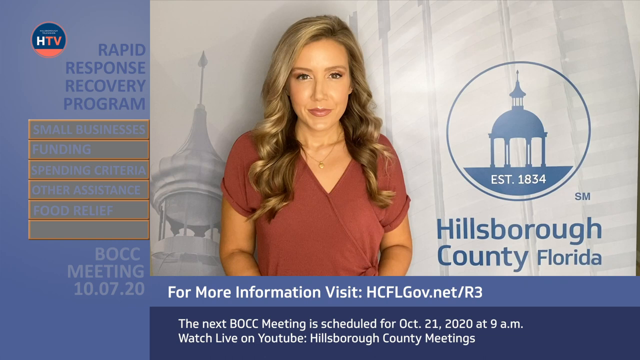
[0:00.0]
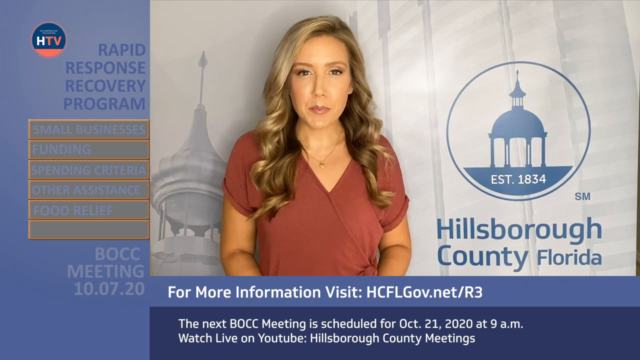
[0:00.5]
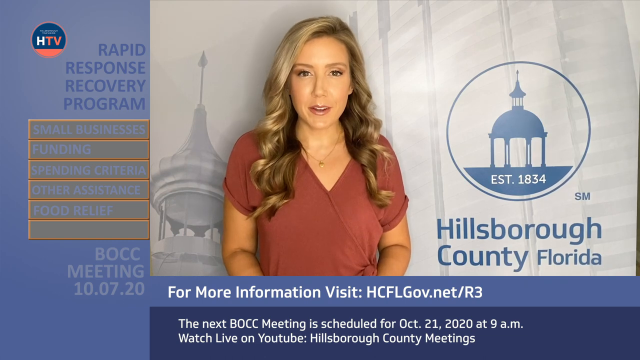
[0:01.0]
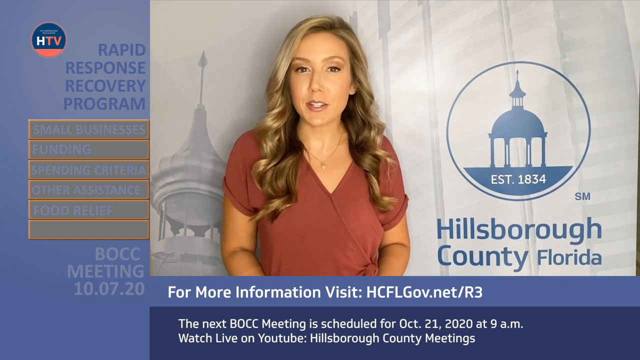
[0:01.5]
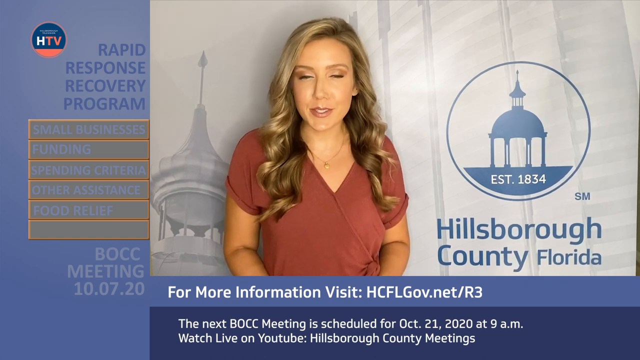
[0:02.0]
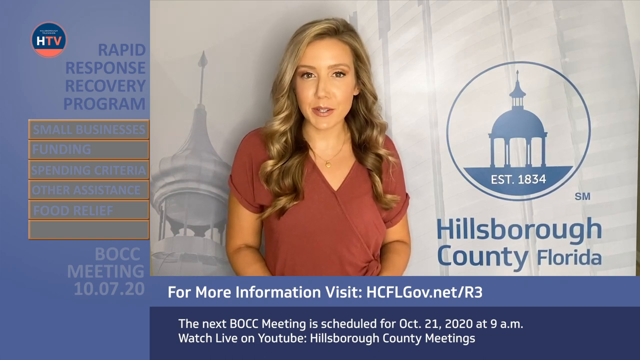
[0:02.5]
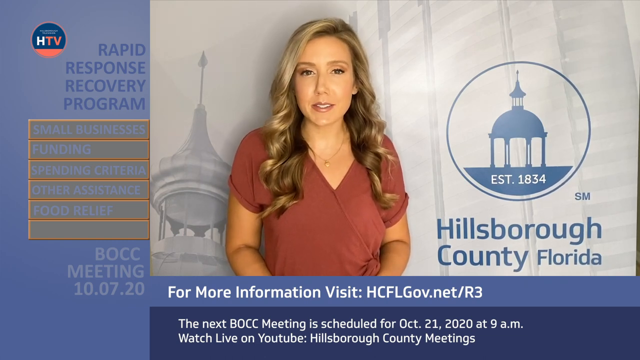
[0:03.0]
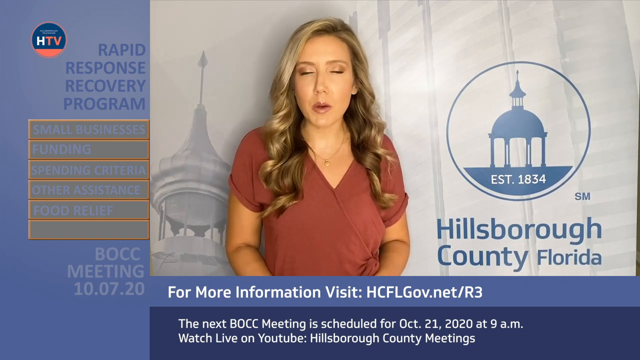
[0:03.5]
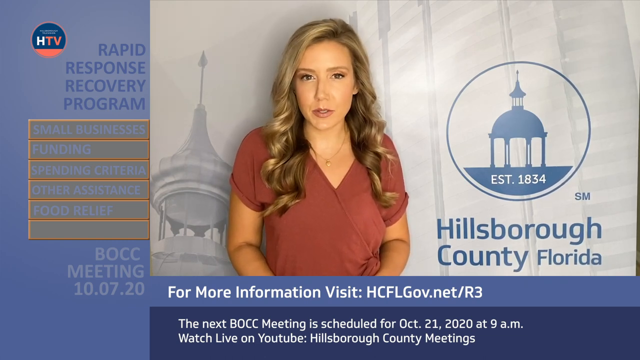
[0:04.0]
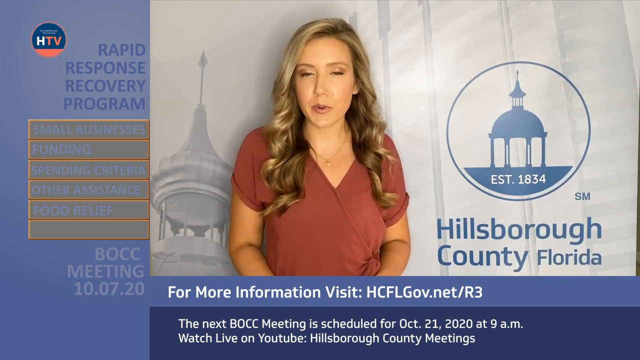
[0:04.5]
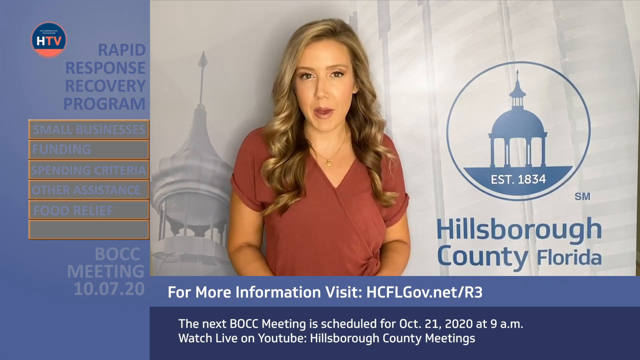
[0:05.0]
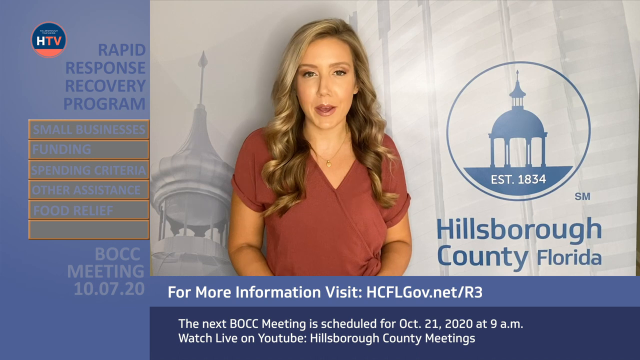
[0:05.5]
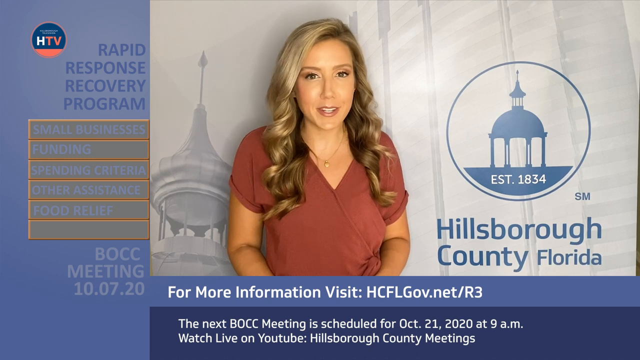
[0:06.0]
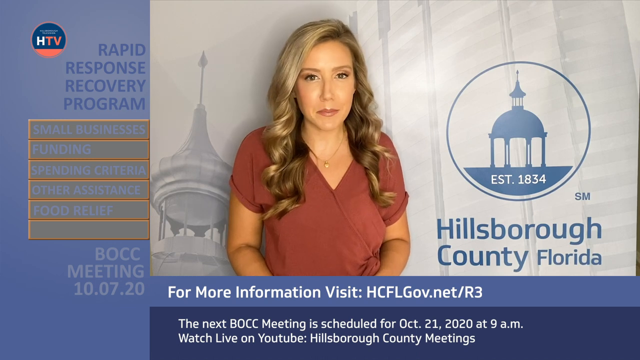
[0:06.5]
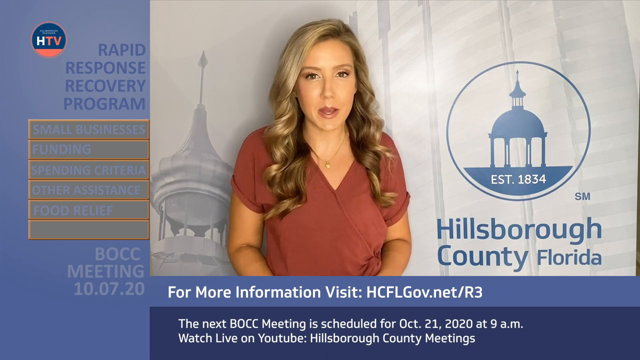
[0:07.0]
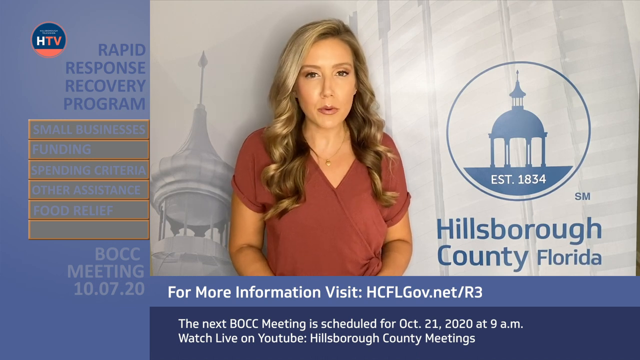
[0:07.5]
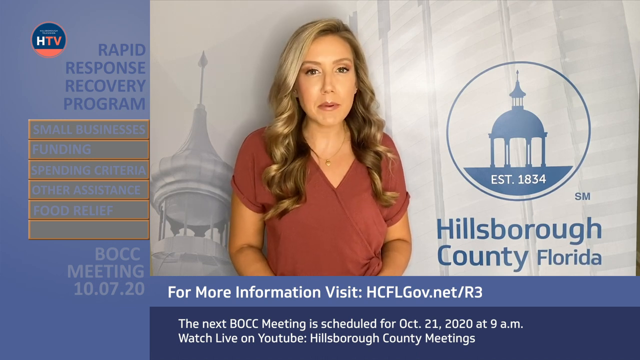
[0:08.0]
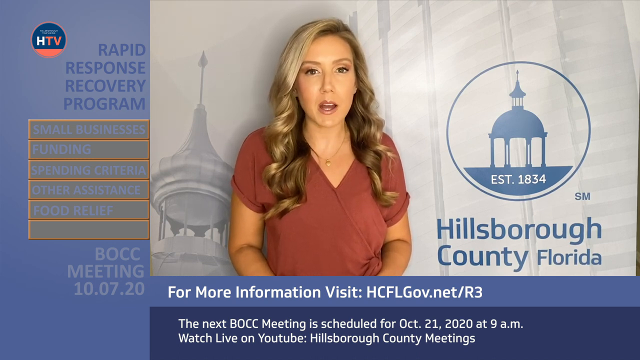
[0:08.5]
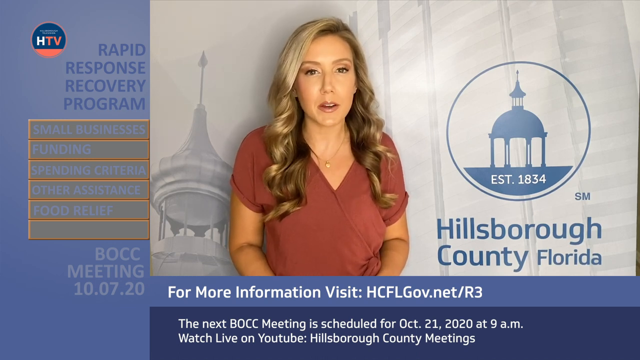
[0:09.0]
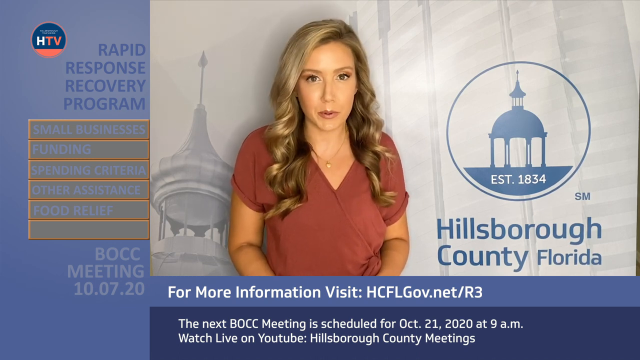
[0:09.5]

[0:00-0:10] The video appears to show news about things occurring in what looks to be Hillsborough County, Florida. A person speaks on the right side of the screen, with a logo that says "Hillsborough County, Florida" and an established symbol with the date 1834, suggesting some type of local channel. On the left side is a logo that says "HTV" and text that says "Rapid Response Recovery Program", followed by more information about it, a meeting shown at the bottom, and more information on a website. The person, who wears a reddish-style shirt and has curly, brownish hair, seems to just be speaking, possibly going over a news story.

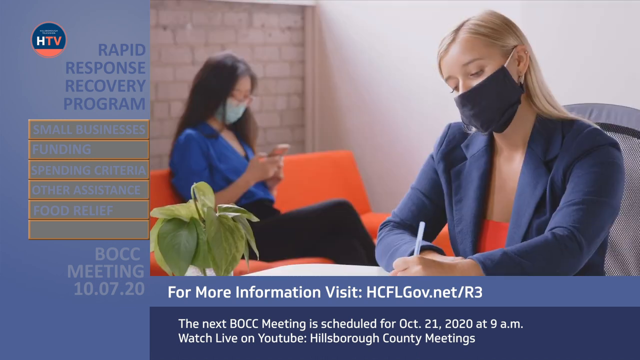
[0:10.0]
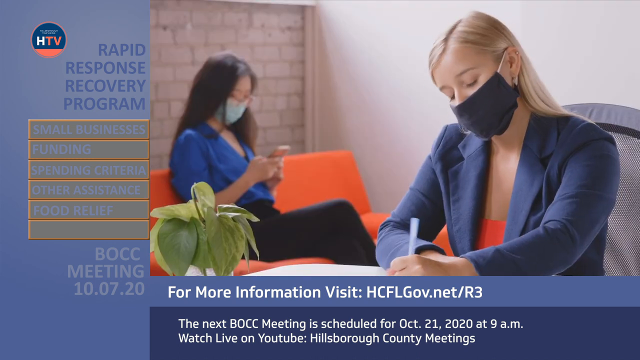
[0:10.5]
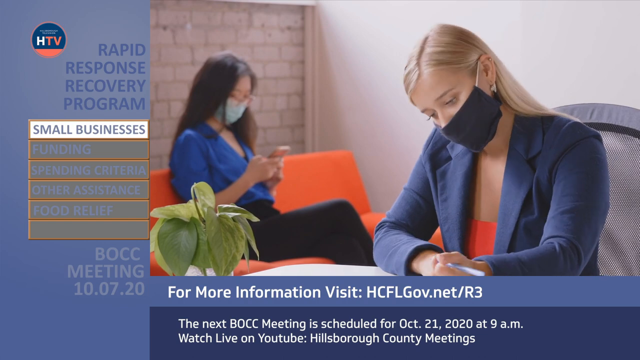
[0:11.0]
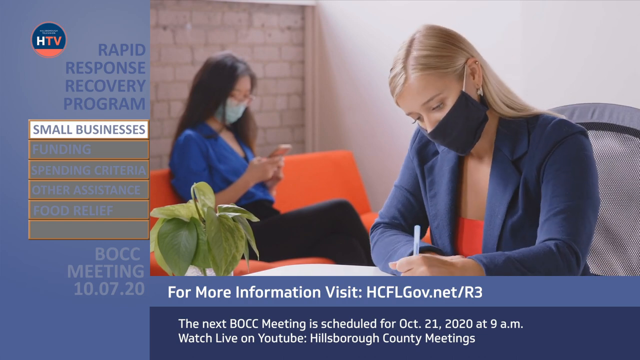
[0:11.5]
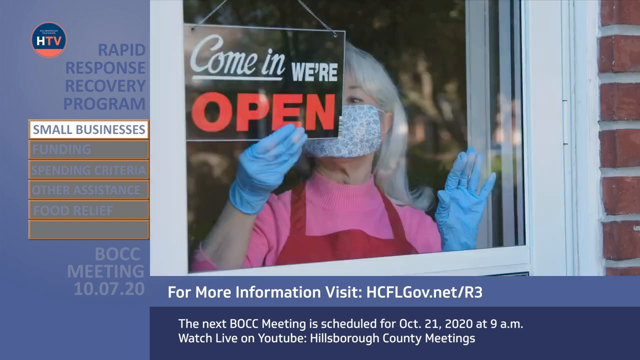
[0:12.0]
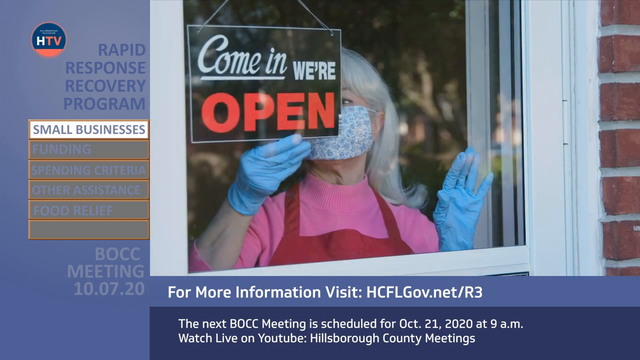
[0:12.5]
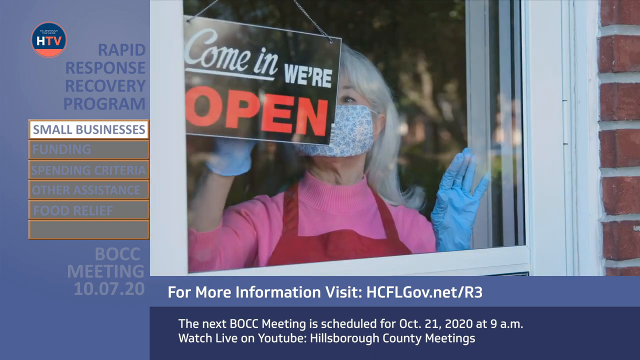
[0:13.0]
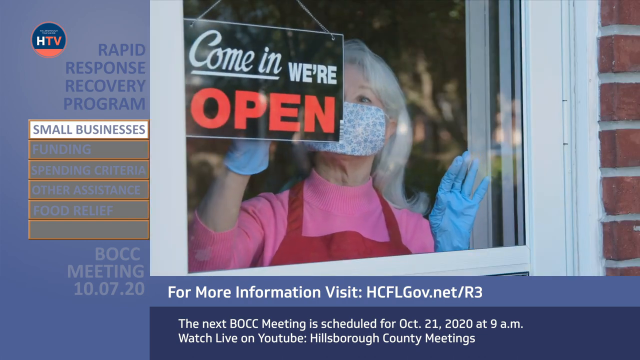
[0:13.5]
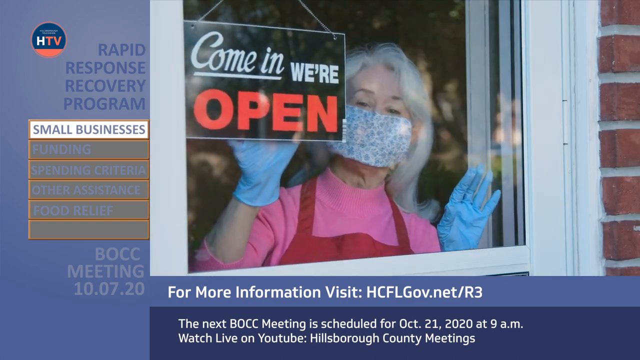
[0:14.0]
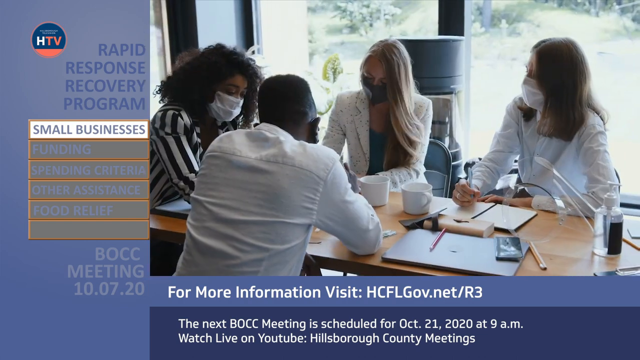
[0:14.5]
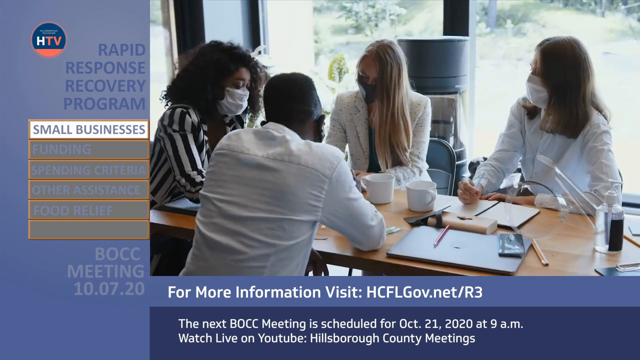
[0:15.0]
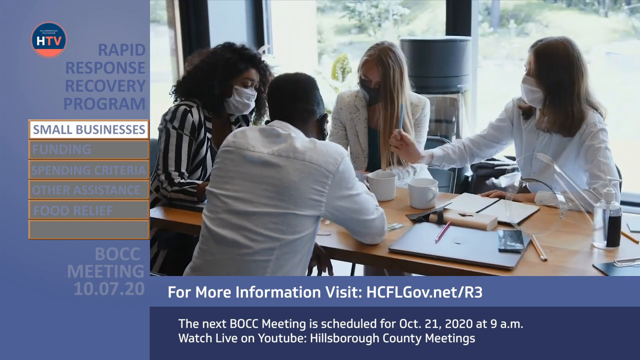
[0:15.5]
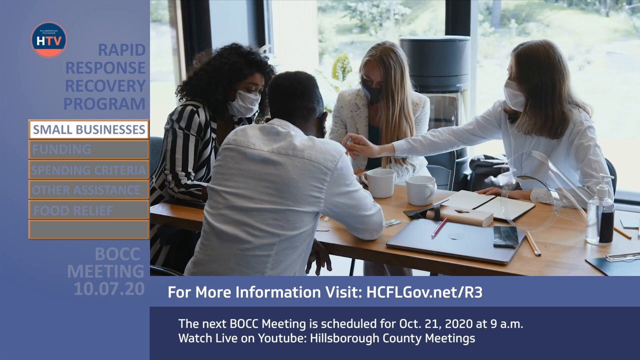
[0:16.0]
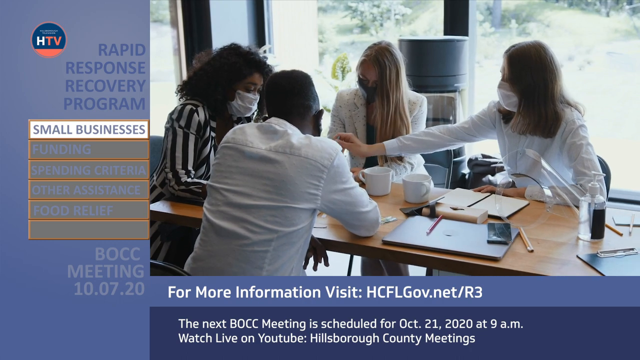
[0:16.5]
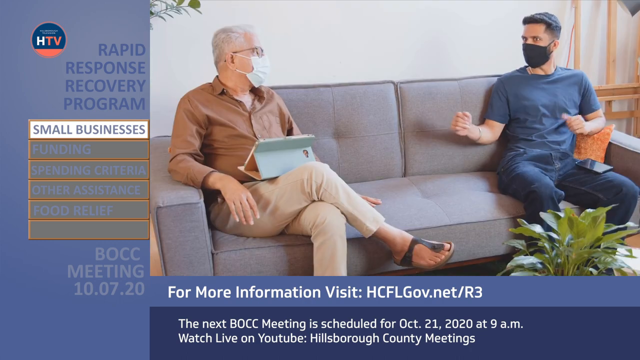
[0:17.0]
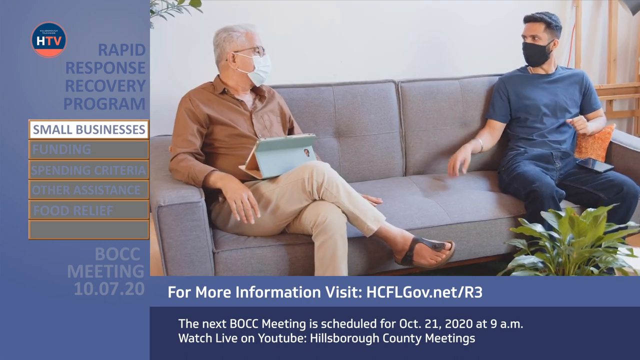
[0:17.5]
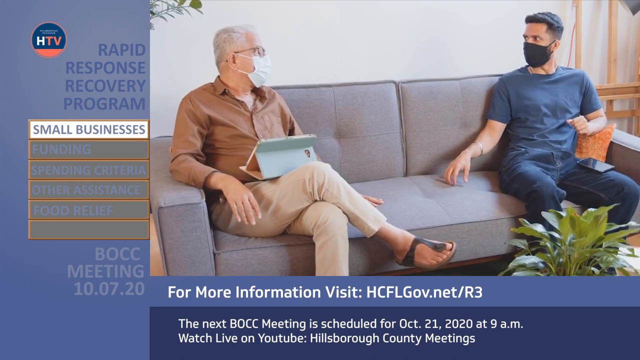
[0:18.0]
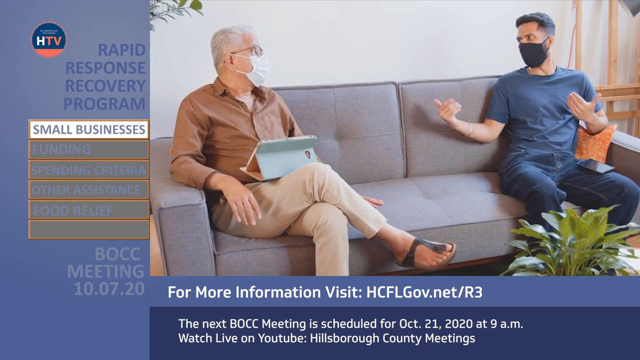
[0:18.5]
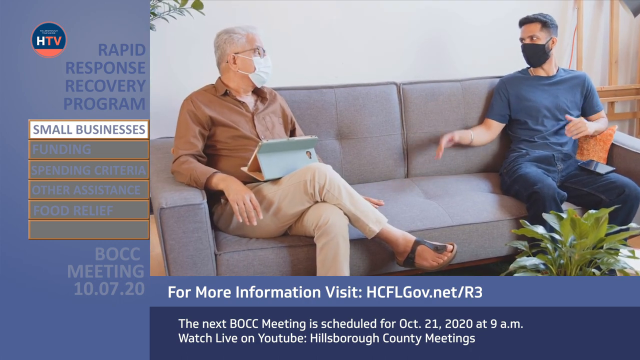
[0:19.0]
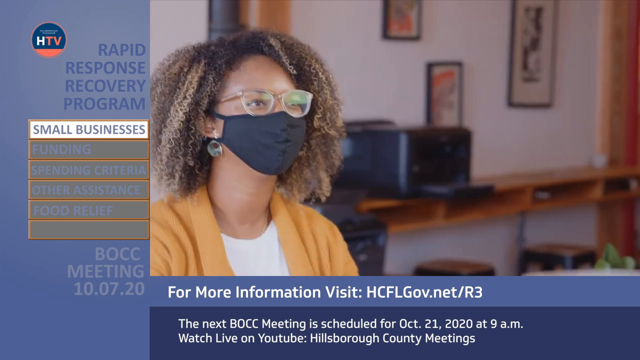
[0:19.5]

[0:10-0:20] Two women are shown, one in the foreground and one in the background. The one in the foreground wears a blue, professional-looking jacket, a dark black mask and a peach or reddish-style shirt underneath; she has blonde hair and is writing with her left hand. The person in the background appears to be on their phone, kind of sitting in a chair. The scene quickly changes to someone opening their door for business, flipping the sign from closed to open. Next, four people of different ethnicities work at a desk wearing masks of all different colors. Another quick shot shows two men sitting on a couch, one in a blue shirt on the right and an older one in a brown shirt on the left, apparently in discussion.